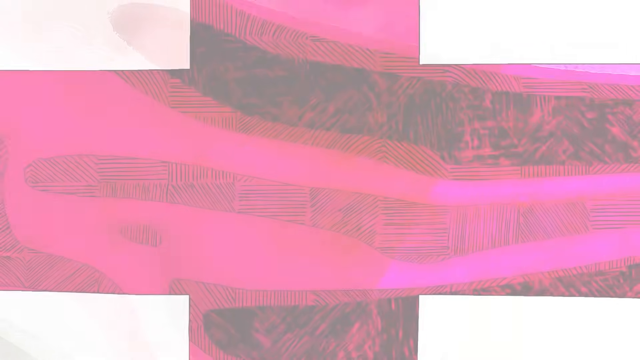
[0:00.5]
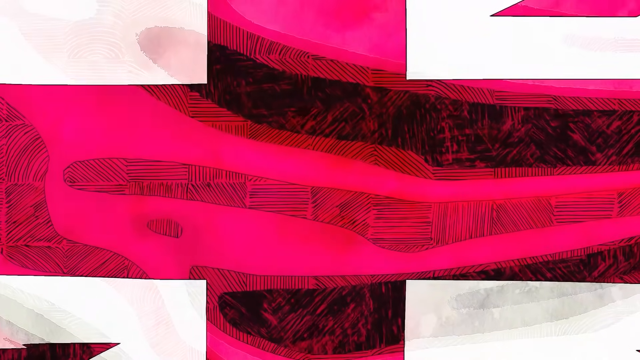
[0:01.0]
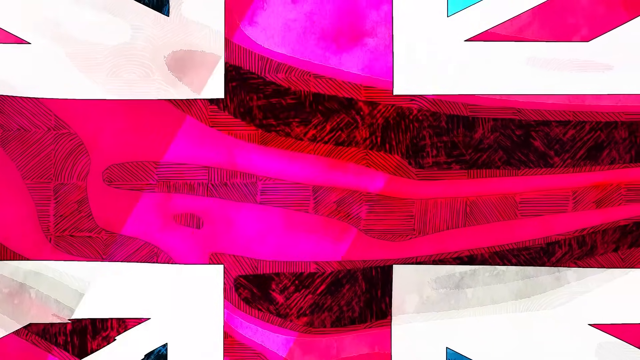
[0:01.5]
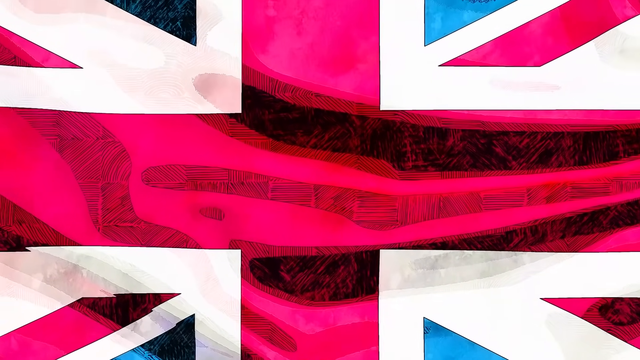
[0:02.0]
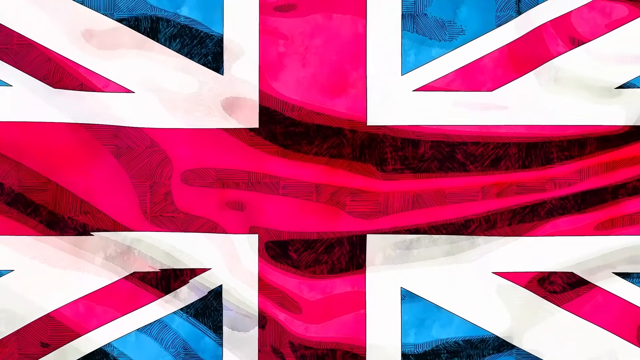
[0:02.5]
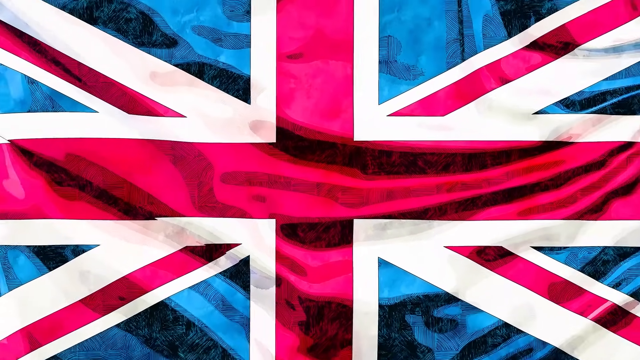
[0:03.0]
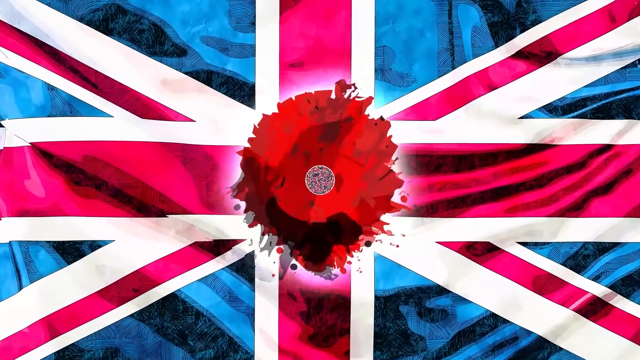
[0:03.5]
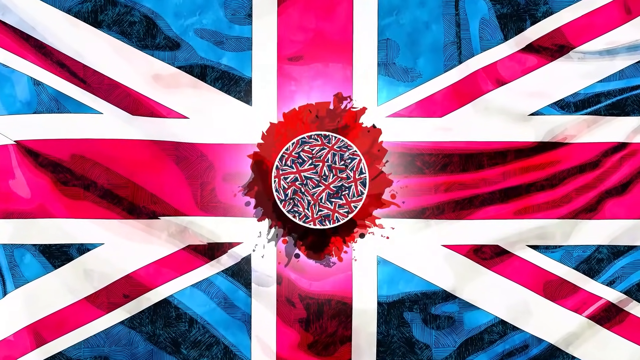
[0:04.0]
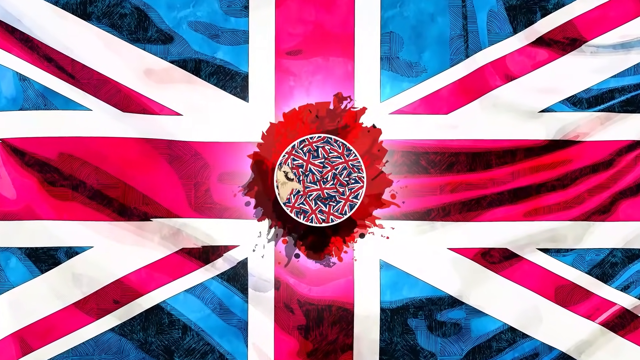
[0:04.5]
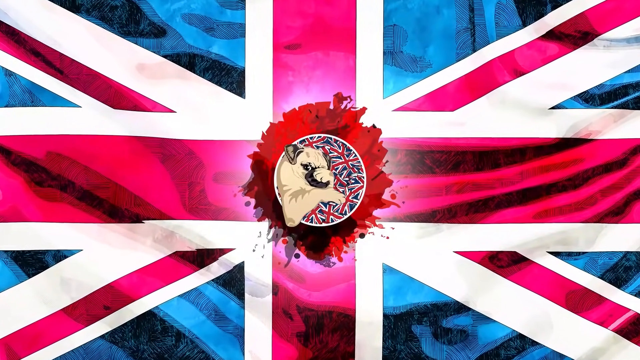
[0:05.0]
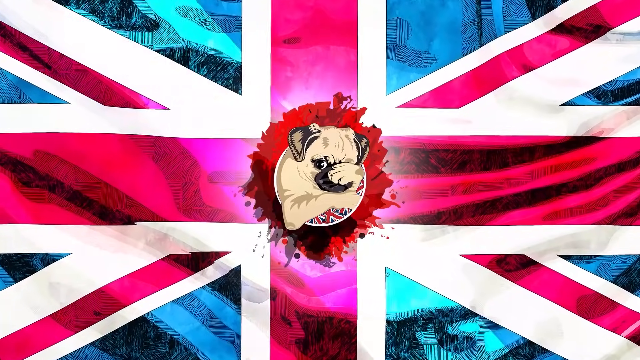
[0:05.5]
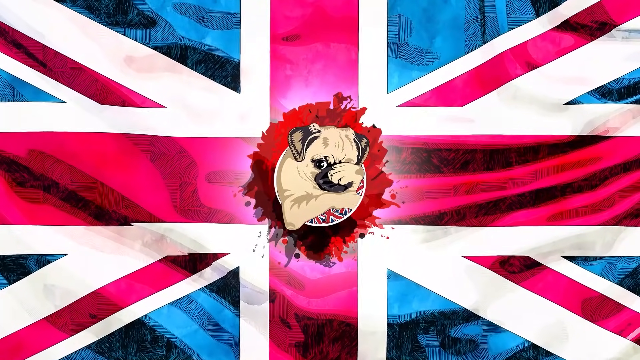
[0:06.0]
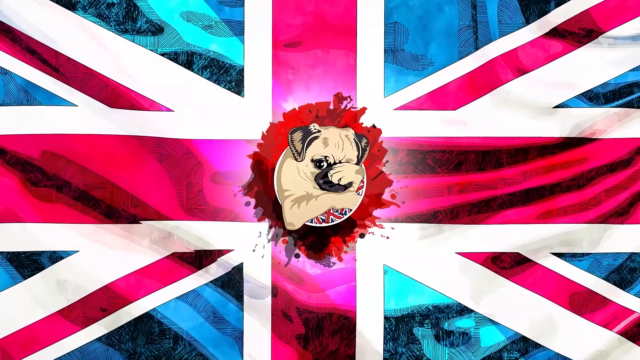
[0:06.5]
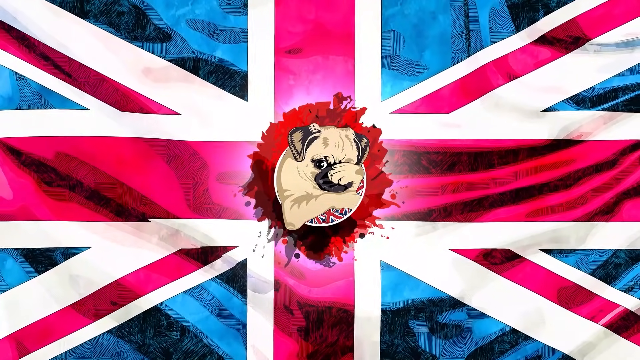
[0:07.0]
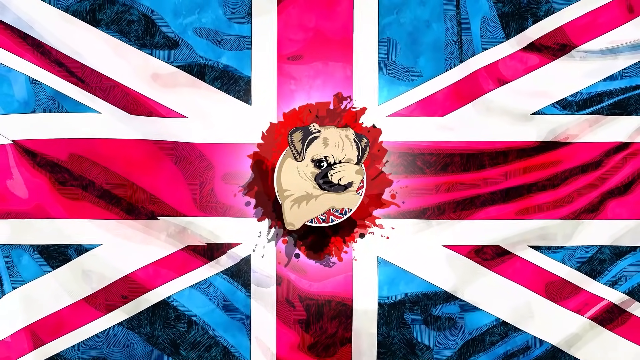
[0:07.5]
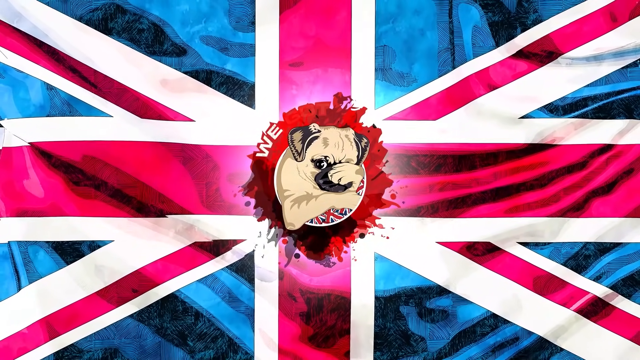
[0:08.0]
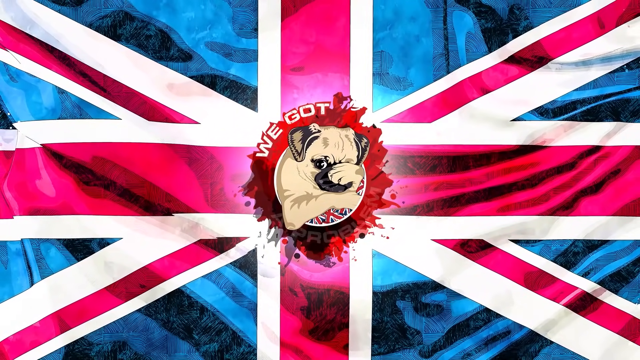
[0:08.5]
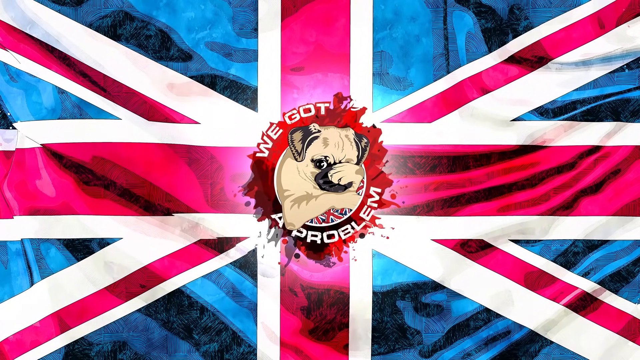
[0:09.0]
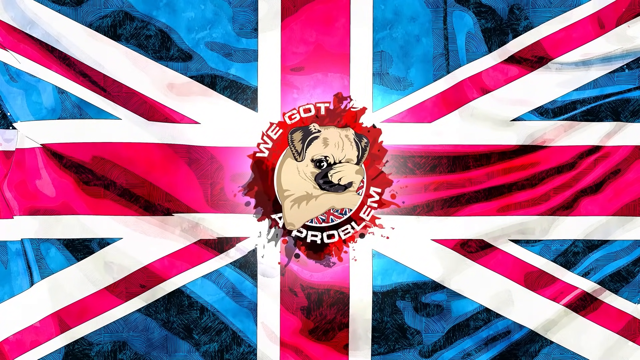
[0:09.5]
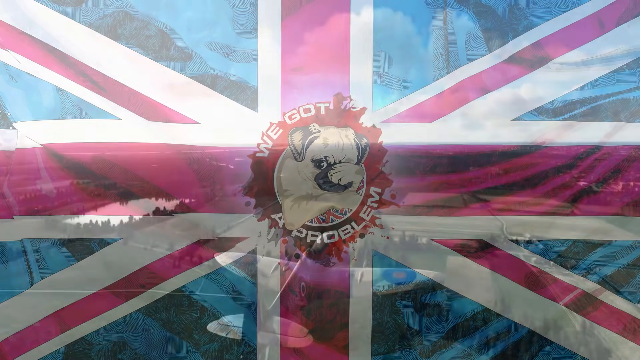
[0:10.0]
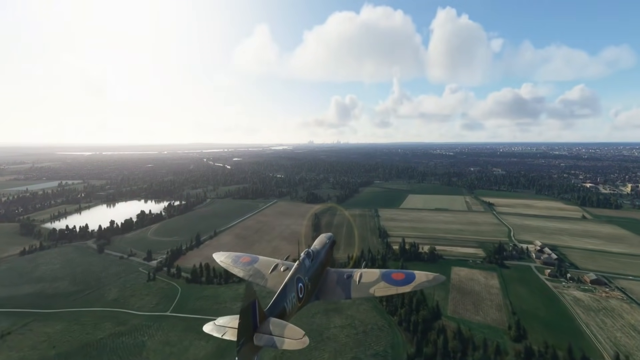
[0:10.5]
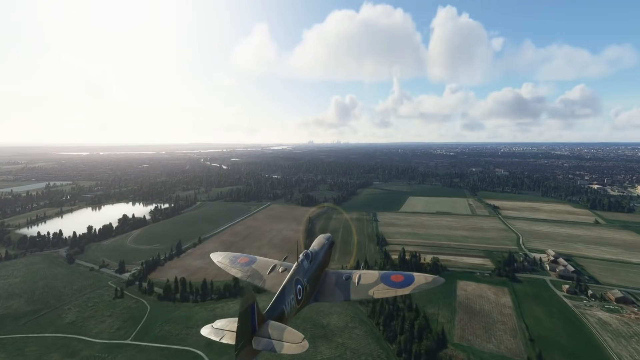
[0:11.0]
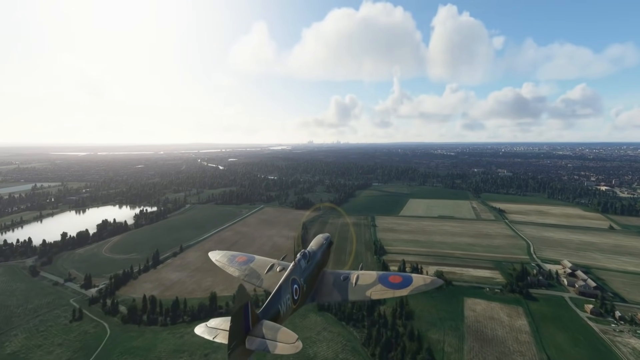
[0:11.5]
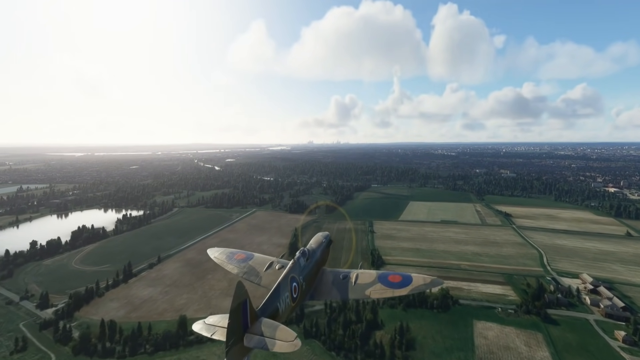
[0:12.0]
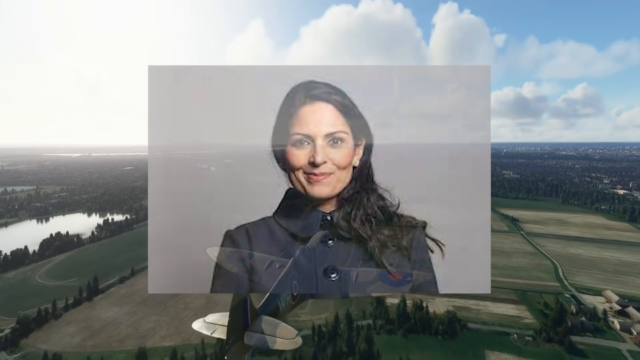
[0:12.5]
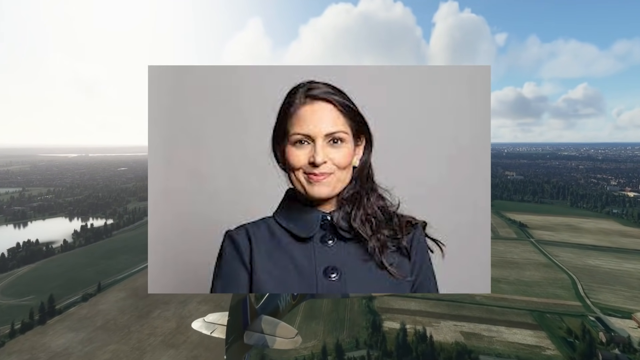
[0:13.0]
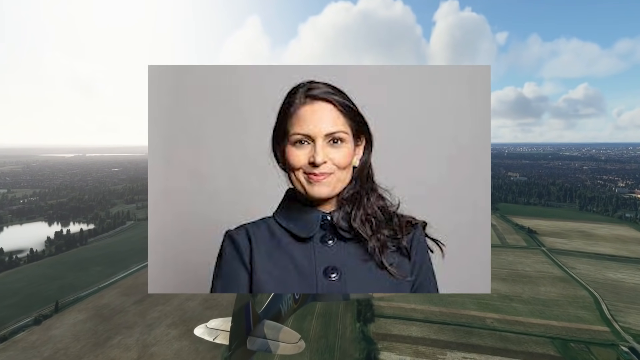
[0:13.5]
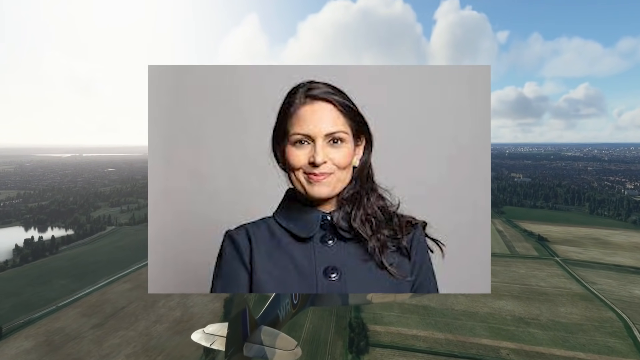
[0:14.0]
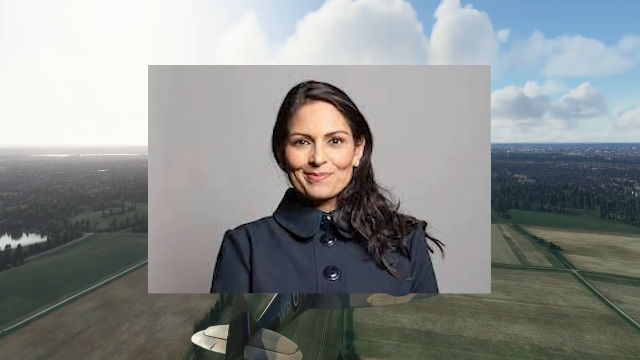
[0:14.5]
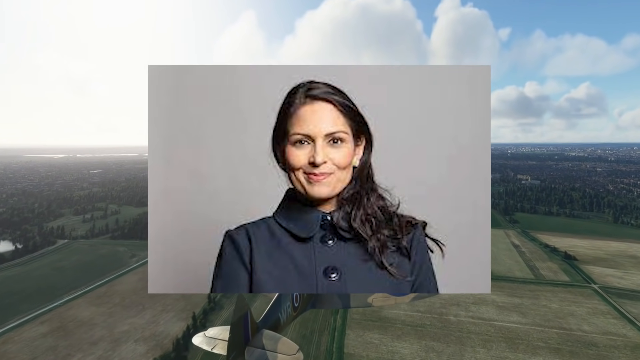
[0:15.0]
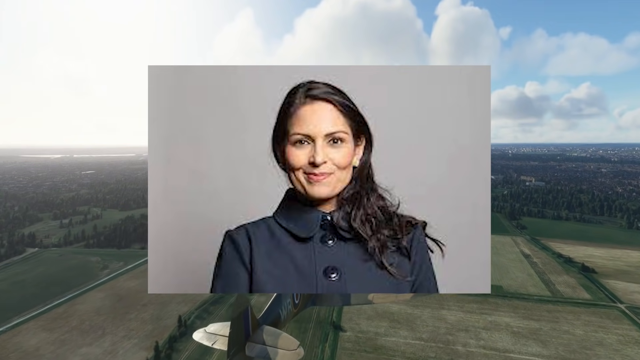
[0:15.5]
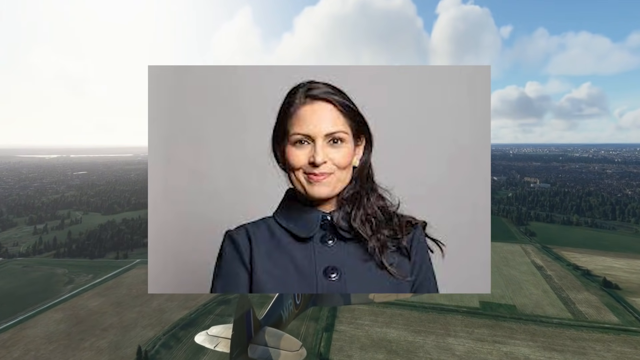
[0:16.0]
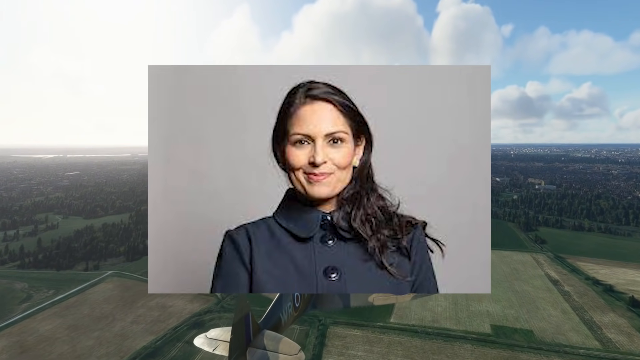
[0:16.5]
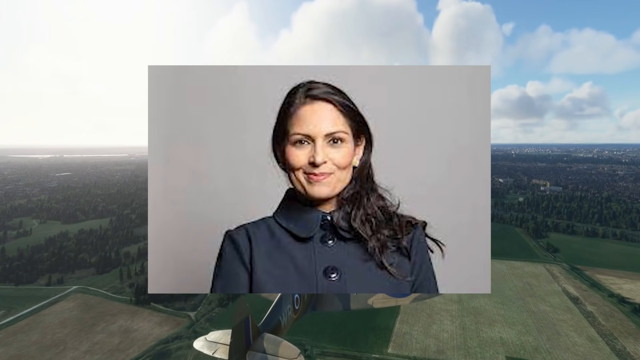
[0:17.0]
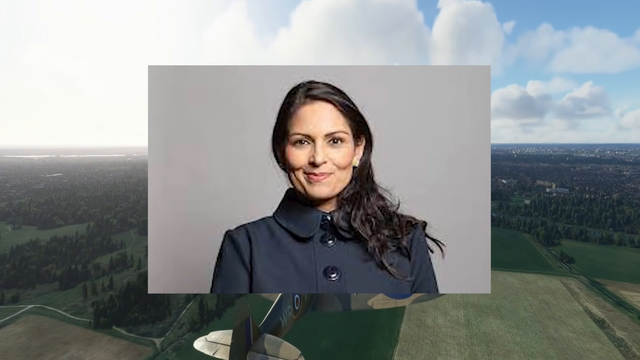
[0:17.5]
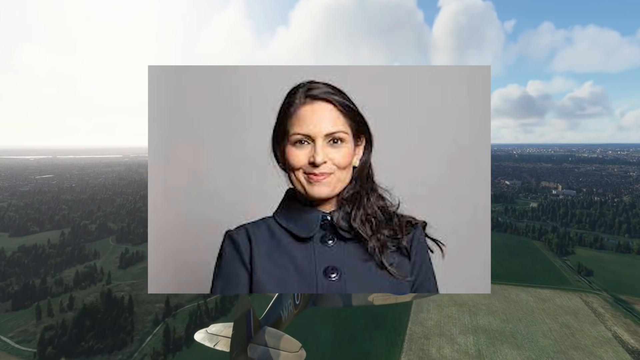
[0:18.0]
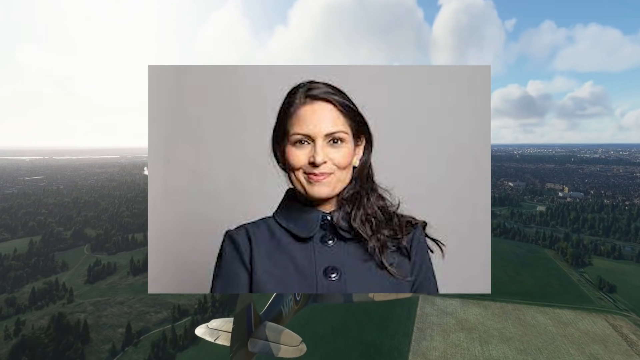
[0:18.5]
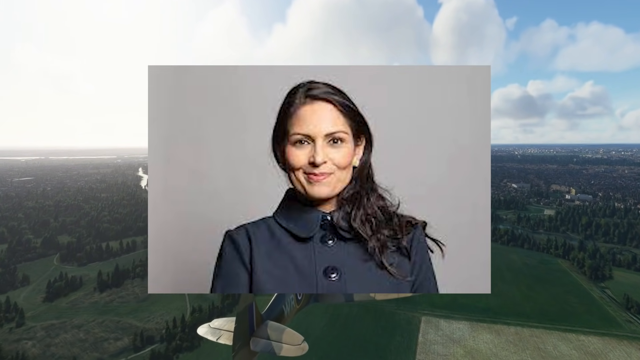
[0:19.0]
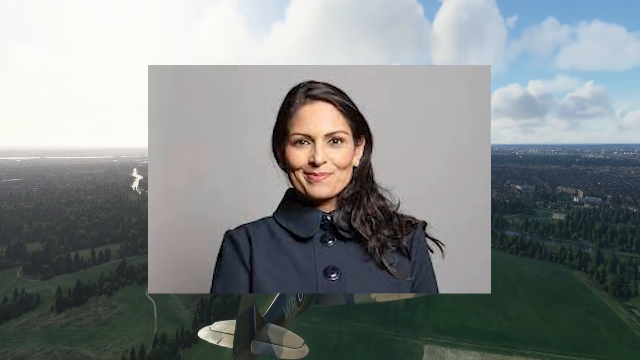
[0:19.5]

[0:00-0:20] A blue flag with hot pink lines running through it like a cross, plus some diagonal lines, all meeting in the middle. In the middle is a circle that looks like splattered paint with a defined circle inside it, and out of it comes what looks like a little pug dog, with the words "we got a problem" around the sides of the dog. Next comes a crop duster type of plane, viewed from the rear, with its propeller rotating. A box appears with a woman in it; she has long brown hair and a beautiful jacket with very big buttons down the front. The plane continues over an open field in an aerial view, and the woman's picture stays in place as farmland and trees go by.